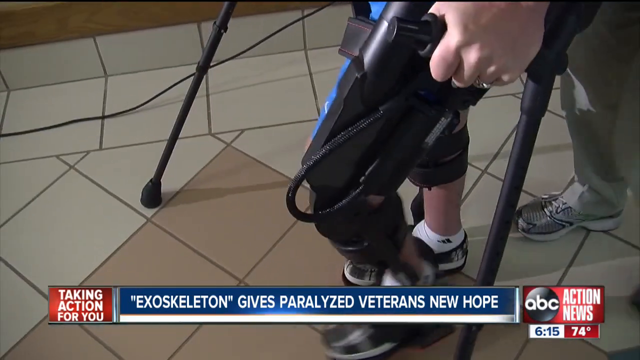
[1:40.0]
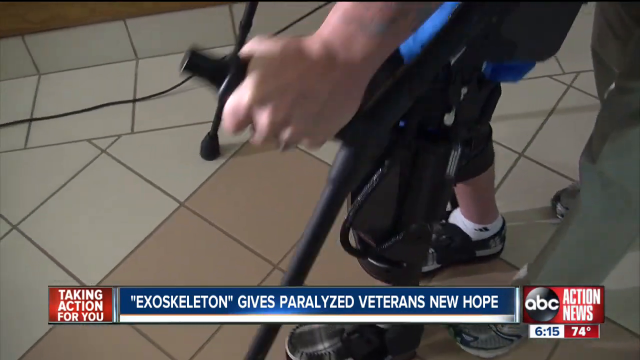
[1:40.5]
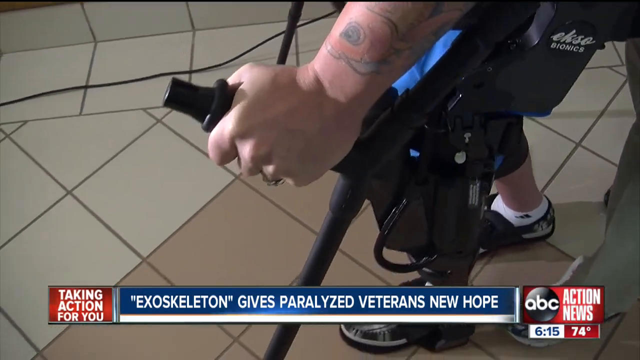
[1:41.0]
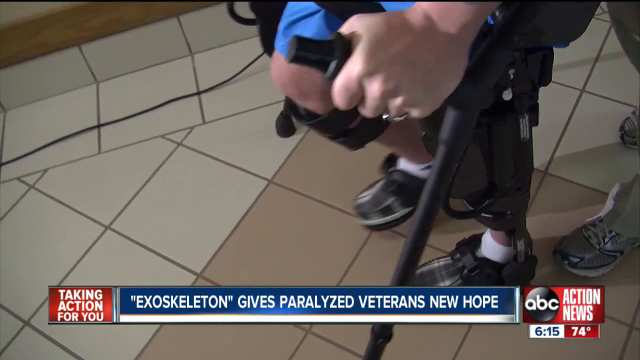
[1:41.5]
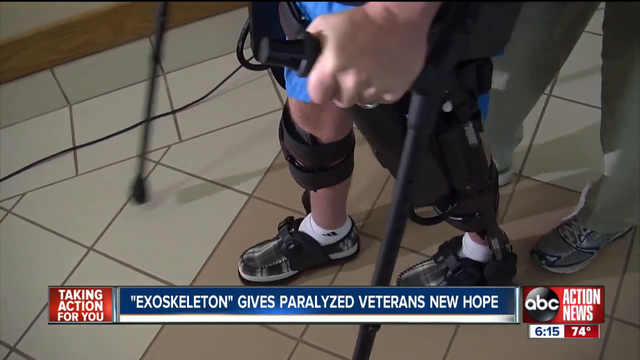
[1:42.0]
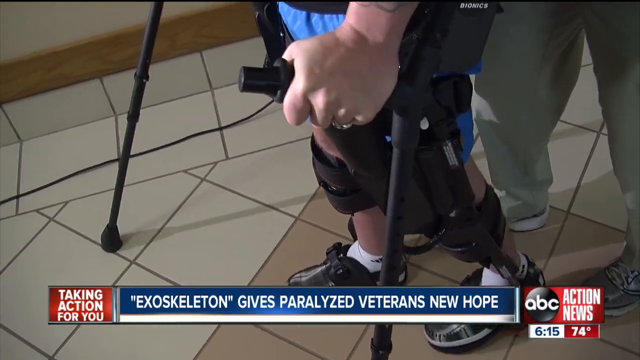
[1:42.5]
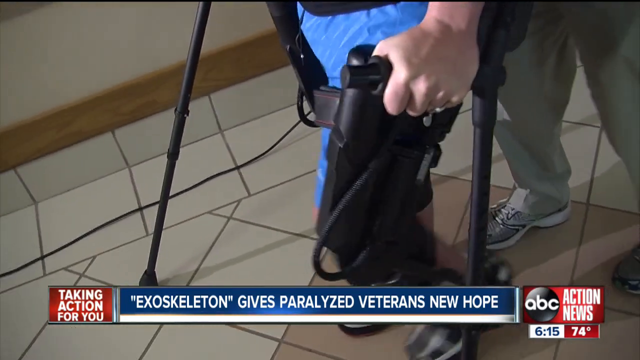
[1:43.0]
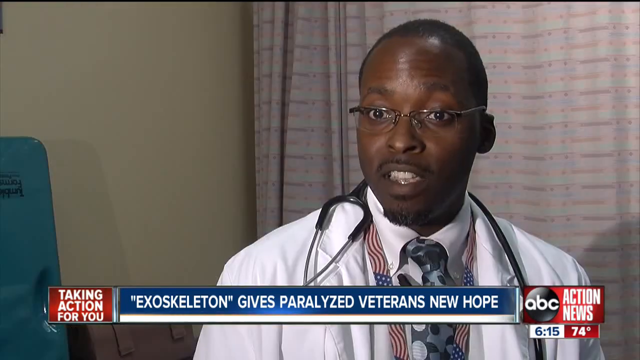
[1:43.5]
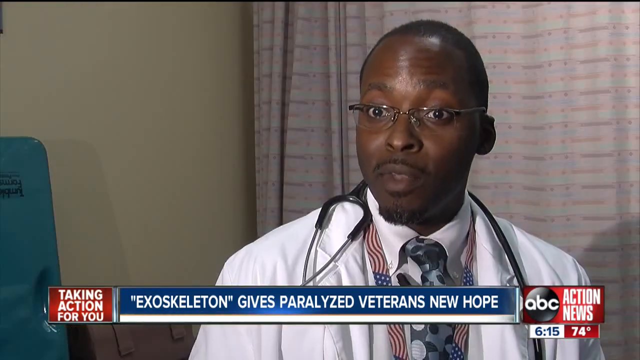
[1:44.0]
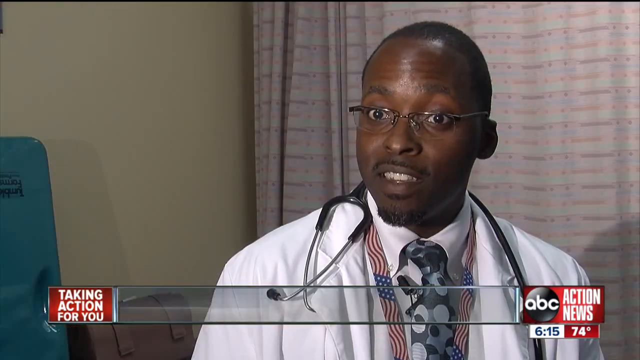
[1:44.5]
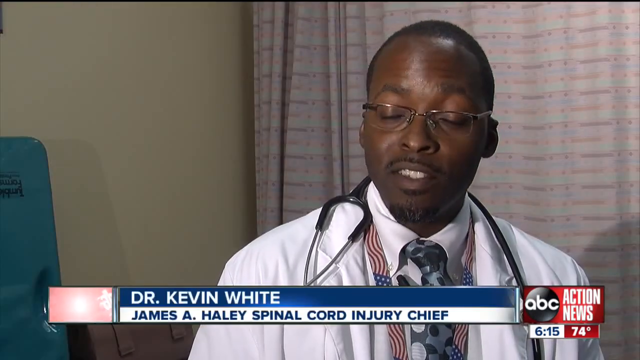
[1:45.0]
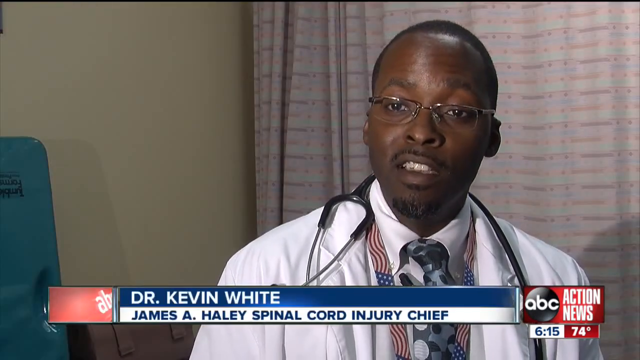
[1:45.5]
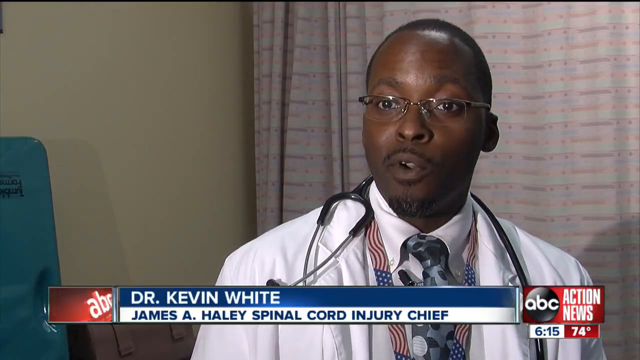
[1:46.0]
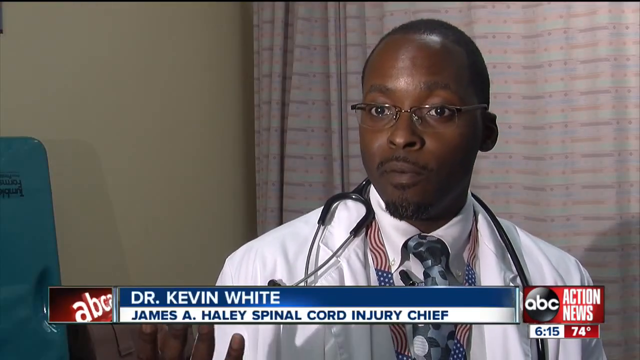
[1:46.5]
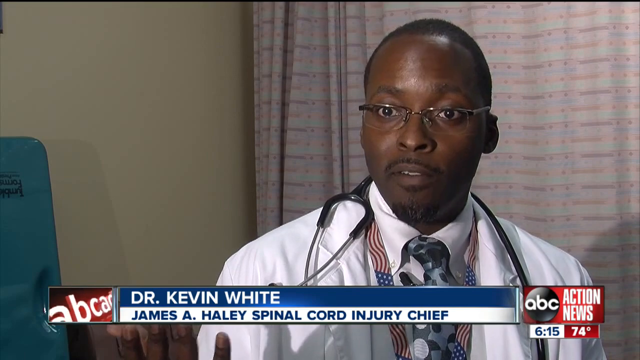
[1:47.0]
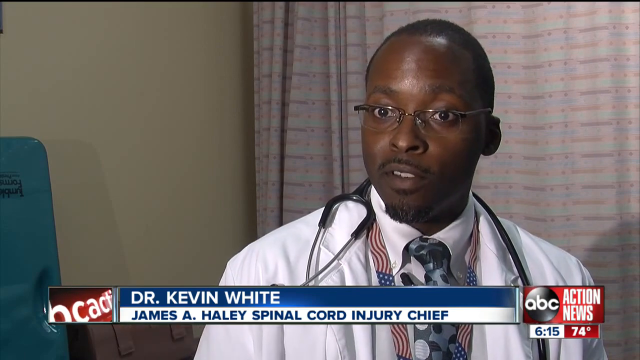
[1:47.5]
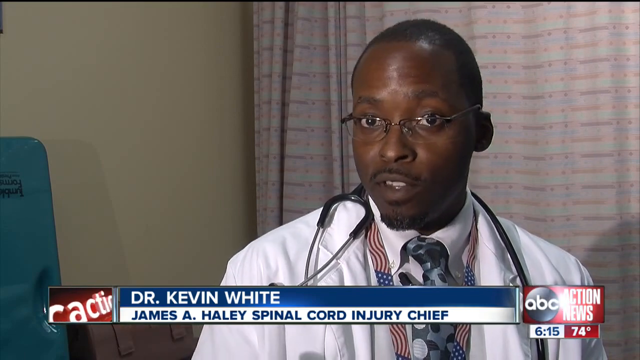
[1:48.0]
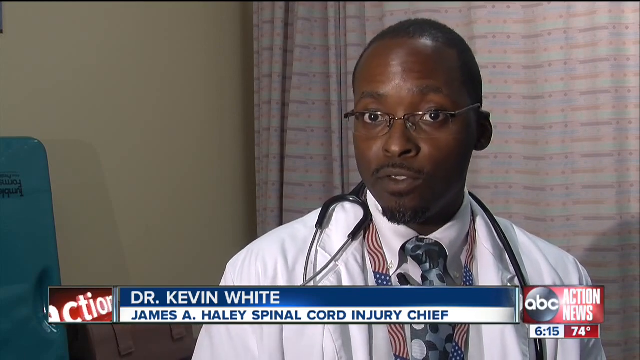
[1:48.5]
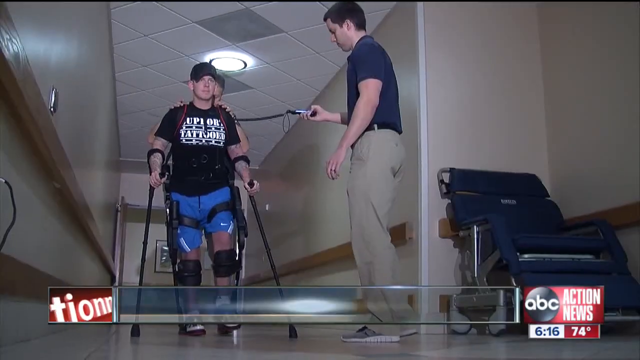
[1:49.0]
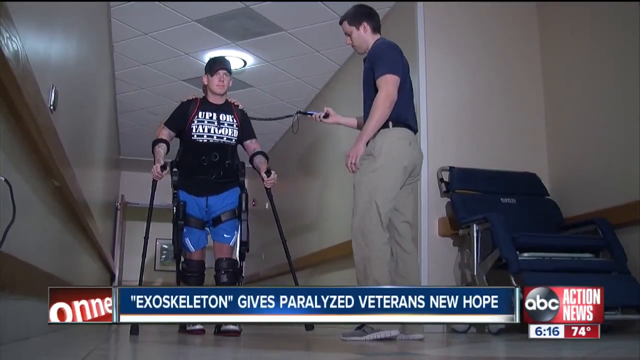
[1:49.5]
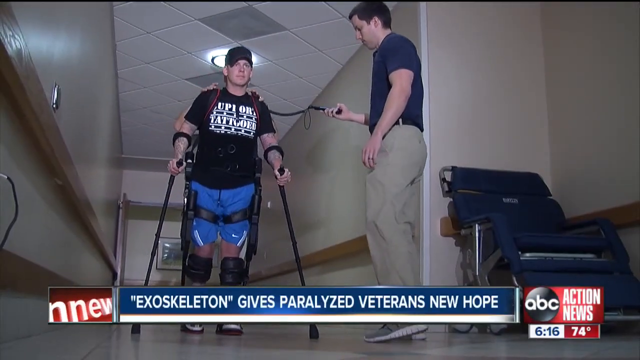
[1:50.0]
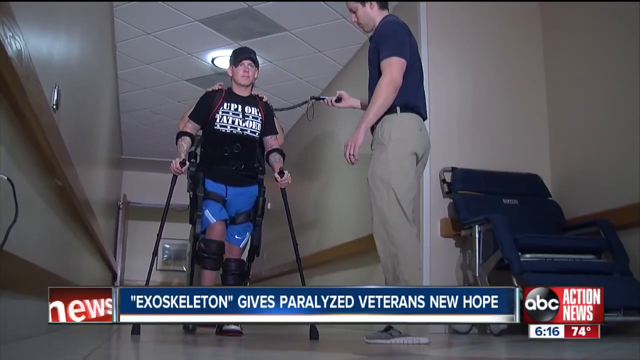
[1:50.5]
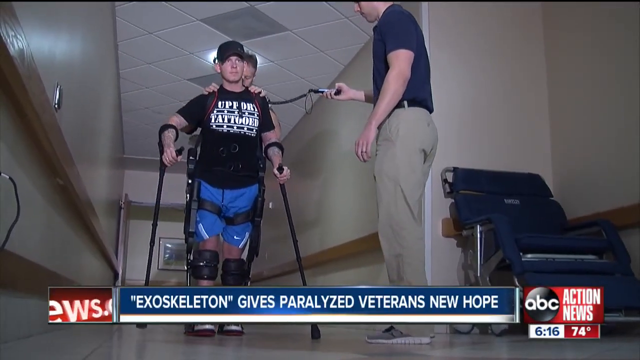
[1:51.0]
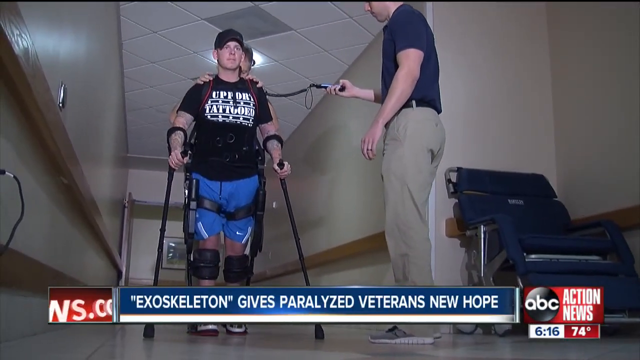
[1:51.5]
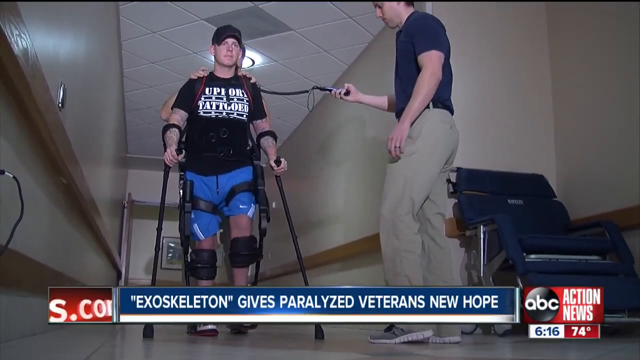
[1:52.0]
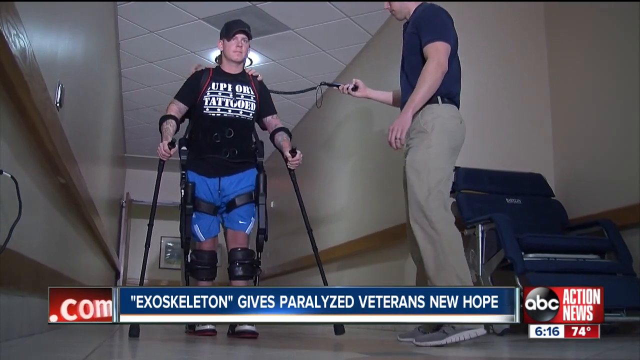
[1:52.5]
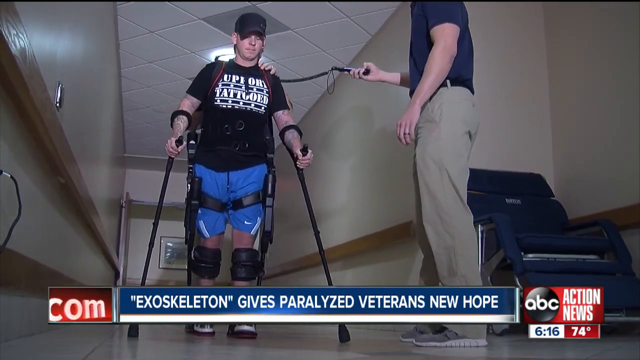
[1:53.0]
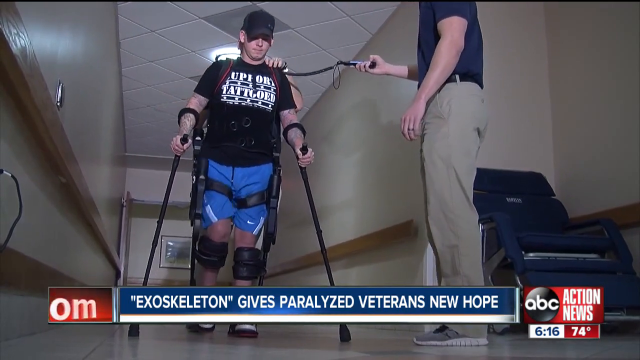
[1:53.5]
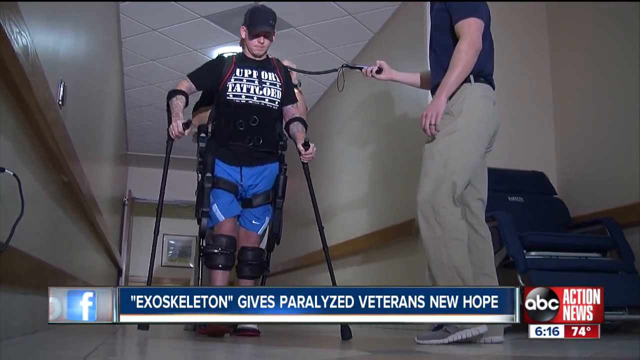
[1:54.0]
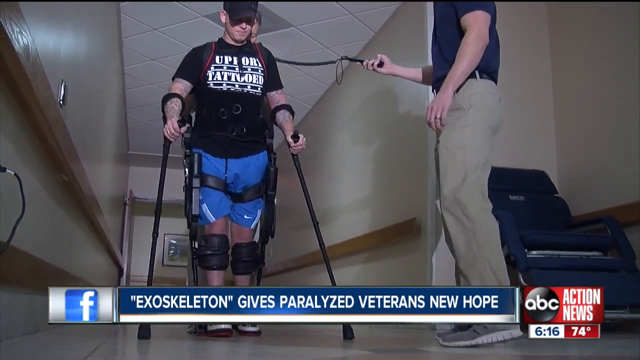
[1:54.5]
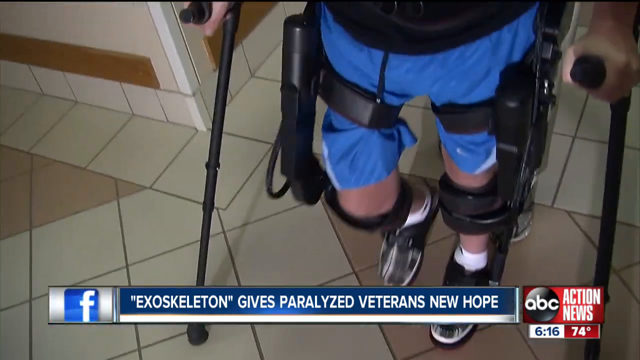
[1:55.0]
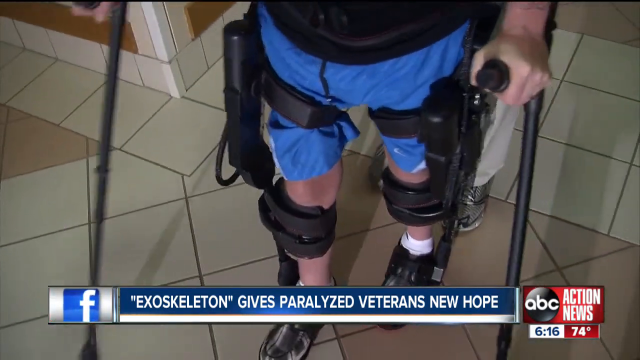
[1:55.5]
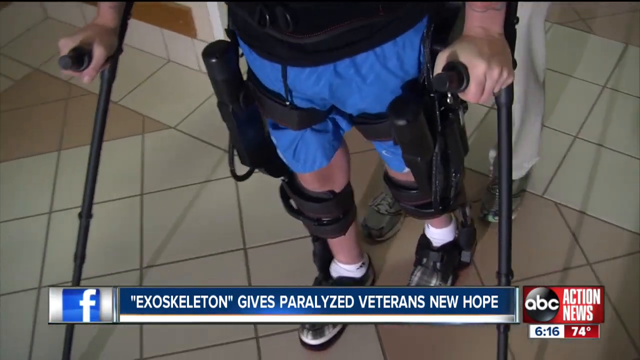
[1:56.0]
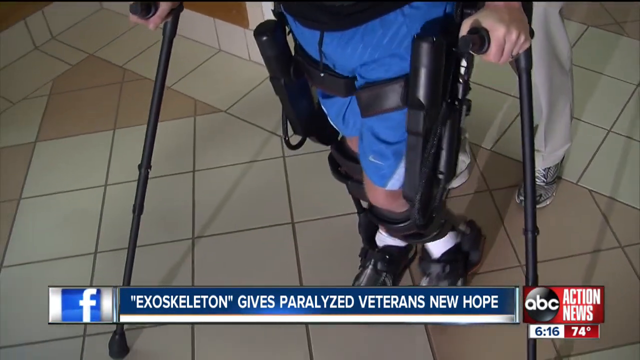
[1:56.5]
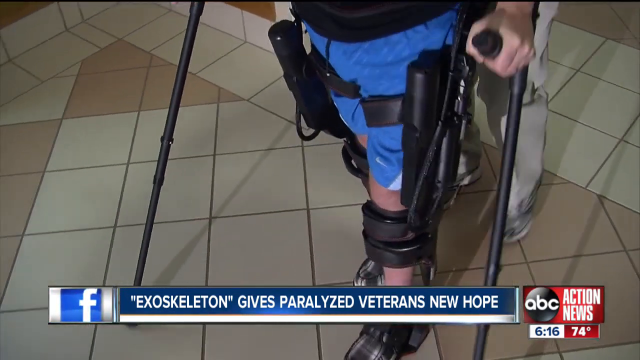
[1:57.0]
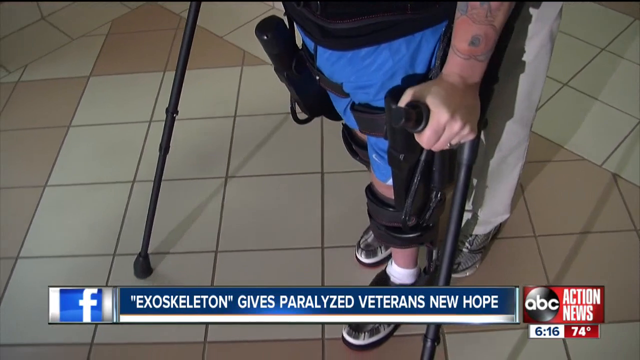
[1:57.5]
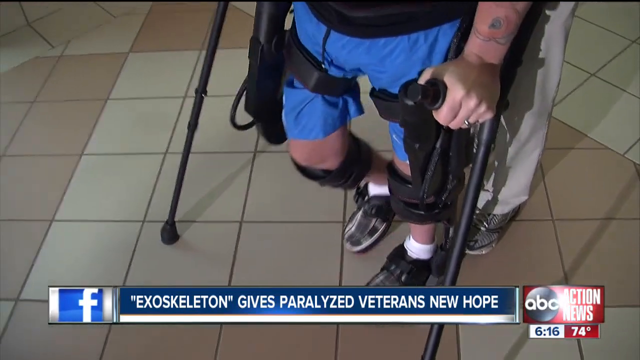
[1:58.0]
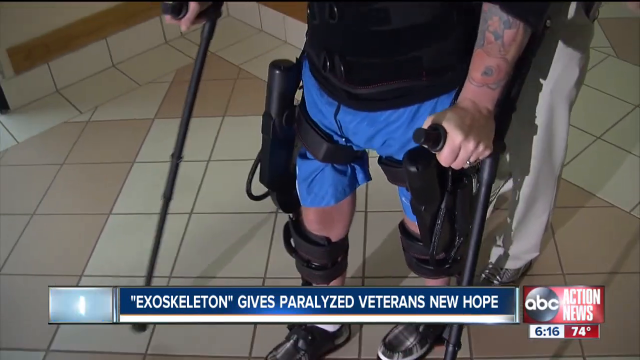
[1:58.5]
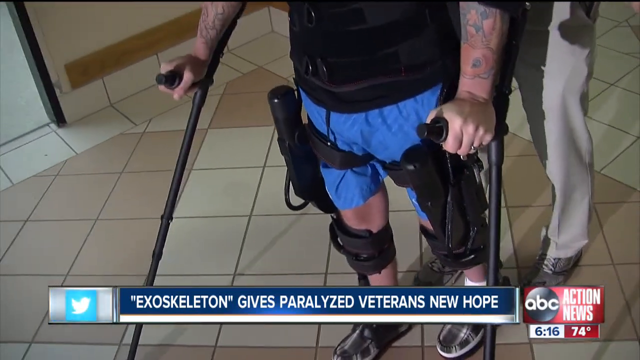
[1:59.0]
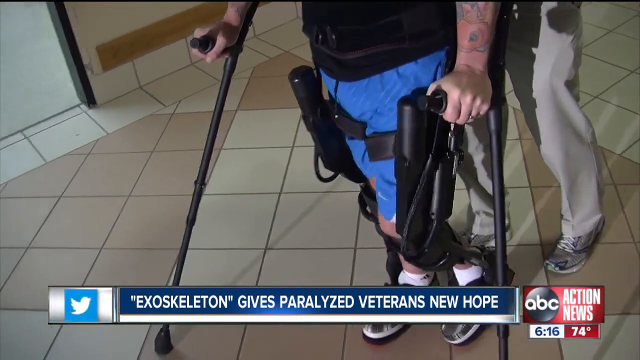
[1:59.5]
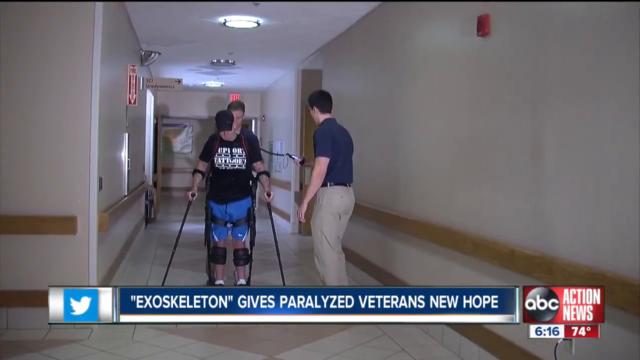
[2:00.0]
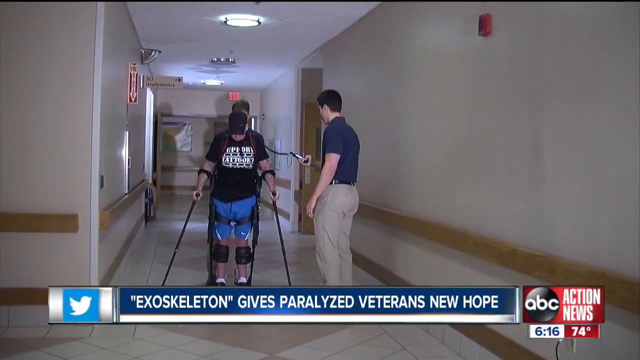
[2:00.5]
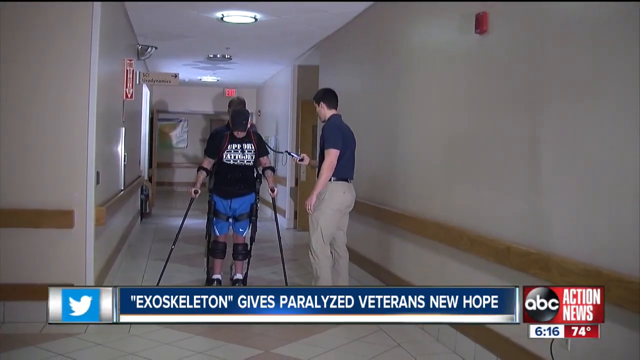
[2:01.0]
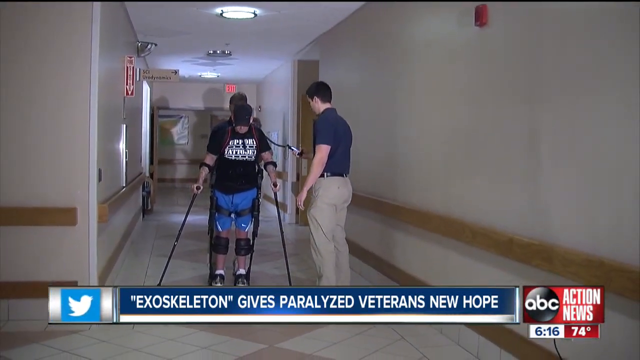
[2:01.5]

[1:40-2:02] The ABC Action News story, "Taking action for you," focuses on paralyzed veterans, with the text "exoskeleton gives paralyzed veterans new hope." A close-up shows a paralyzed soldier with leg braces on his legs and crutches in both hands, taking steps with these and an exoskeleton. A doctor is briefly shown being interviewed. Back in the hallway of what appears to be a hospital, the soldier walks with crutches and the exoskeleton, monitored by two other men. He is wobbly but confident, walking almost without assistance. Something is strapped to his back that looks like it might be some sort of battery pack or computer. The interviewed doctor is identified as Dr. Kevin White, spinal cord injury chief with James A. Haley.